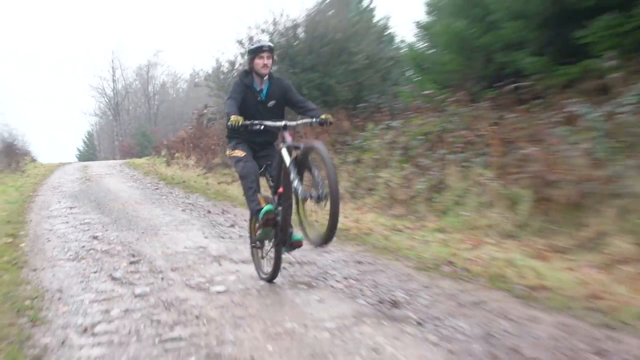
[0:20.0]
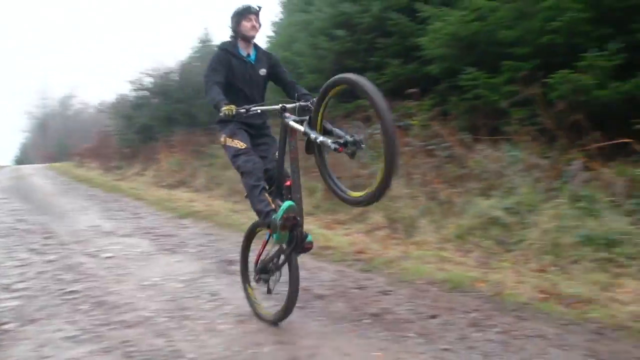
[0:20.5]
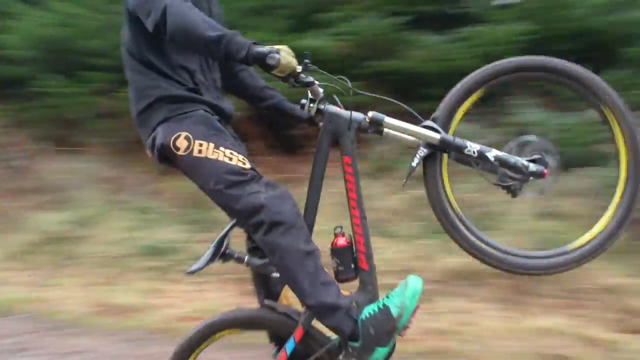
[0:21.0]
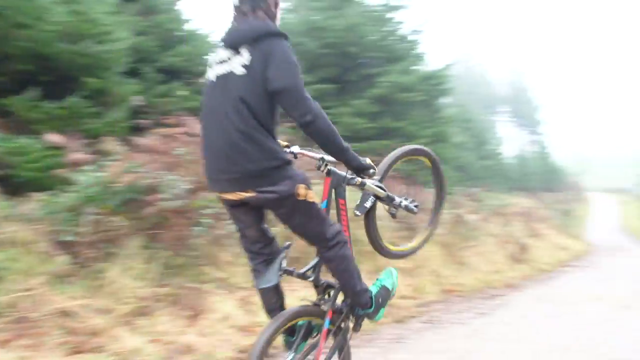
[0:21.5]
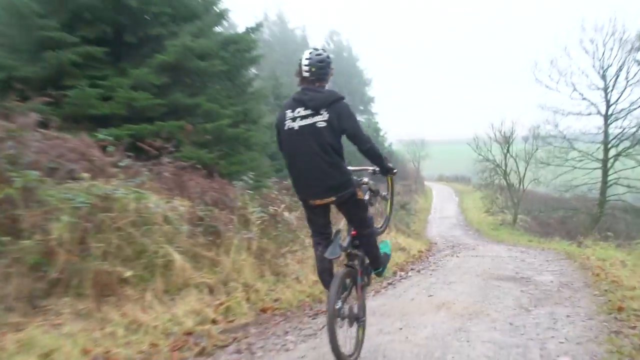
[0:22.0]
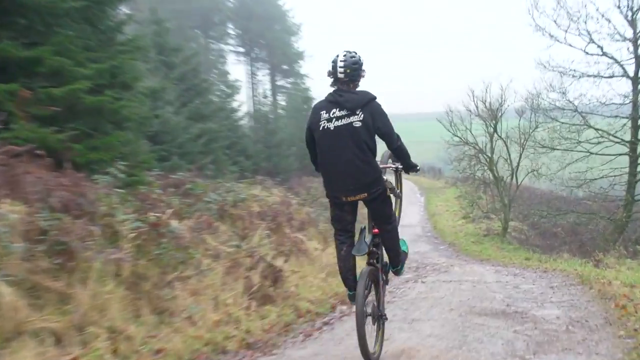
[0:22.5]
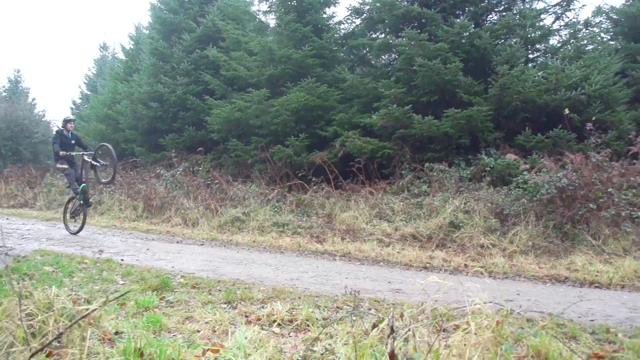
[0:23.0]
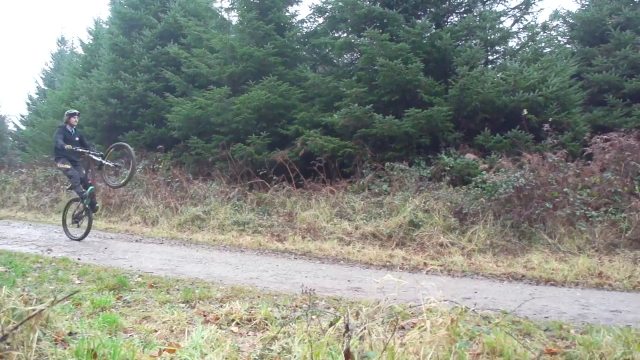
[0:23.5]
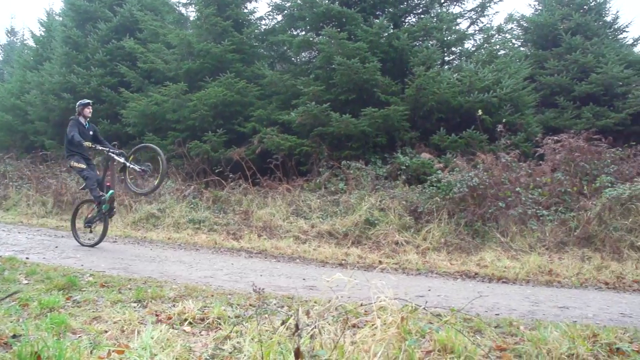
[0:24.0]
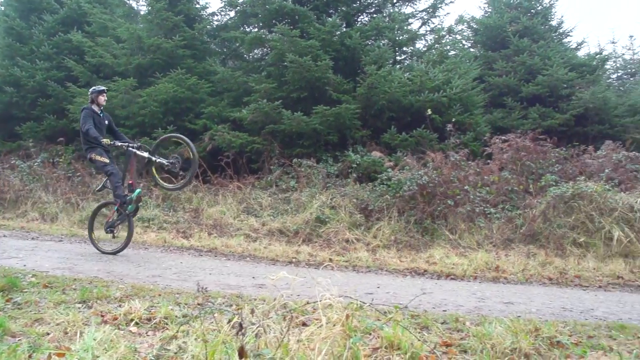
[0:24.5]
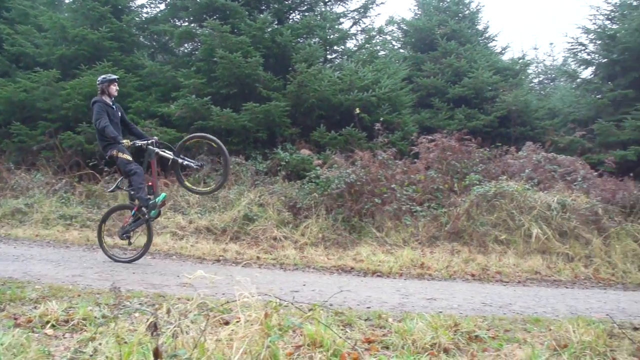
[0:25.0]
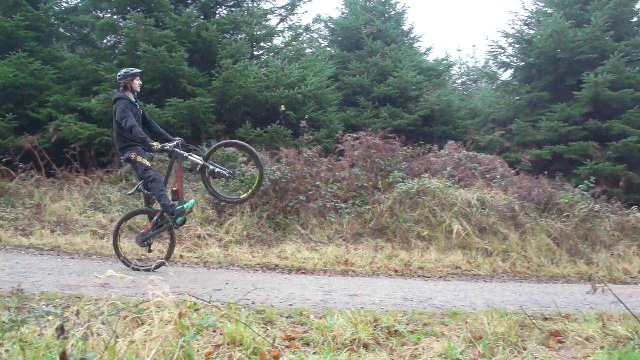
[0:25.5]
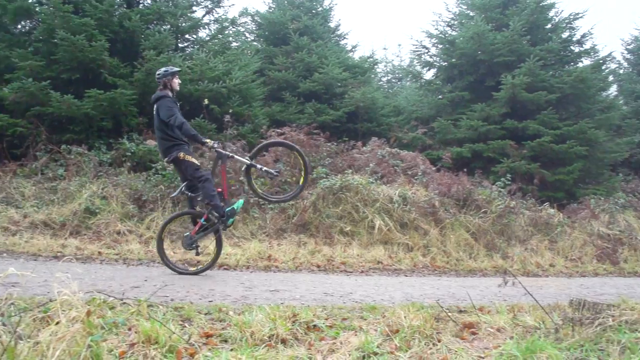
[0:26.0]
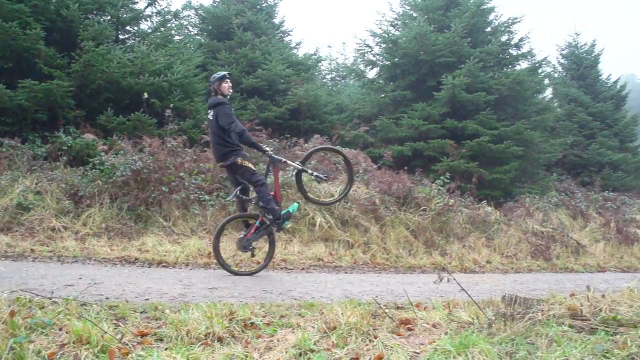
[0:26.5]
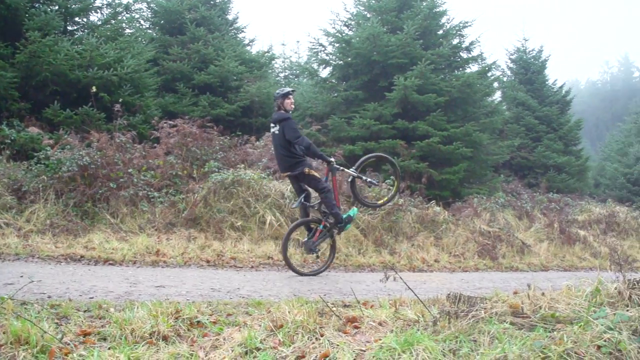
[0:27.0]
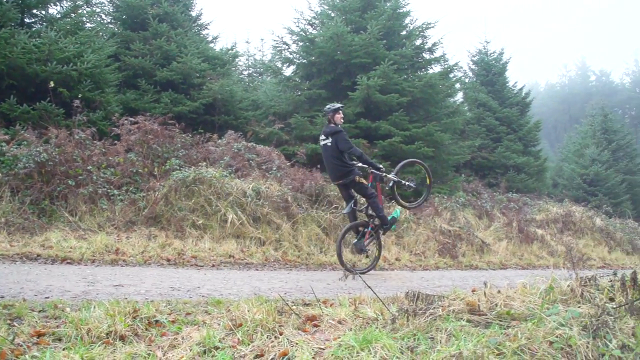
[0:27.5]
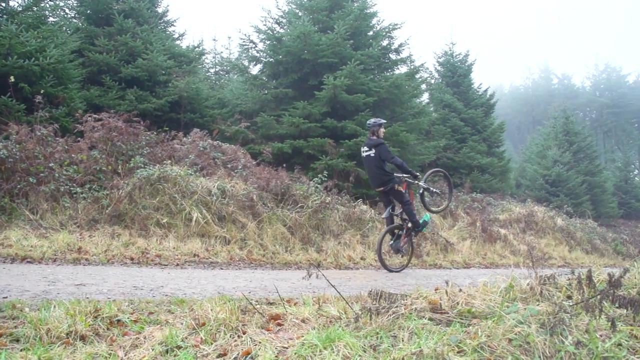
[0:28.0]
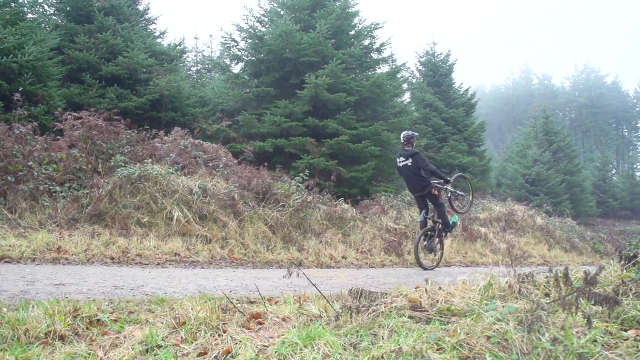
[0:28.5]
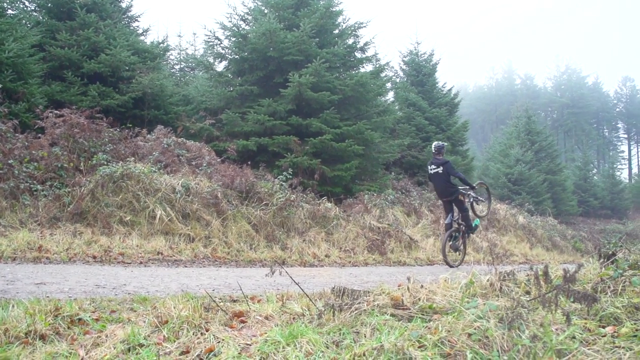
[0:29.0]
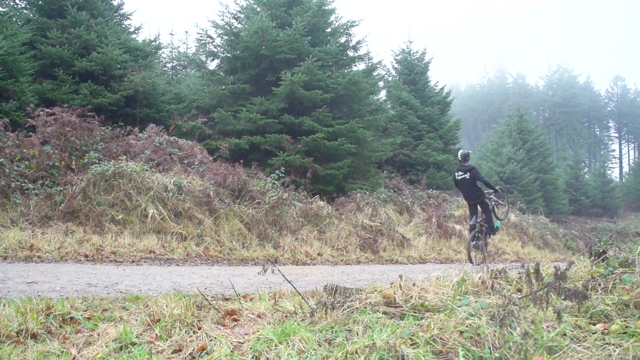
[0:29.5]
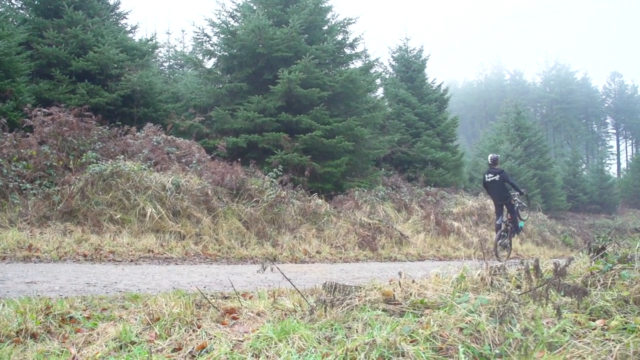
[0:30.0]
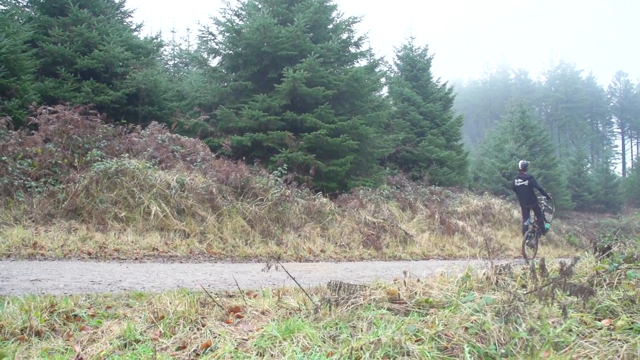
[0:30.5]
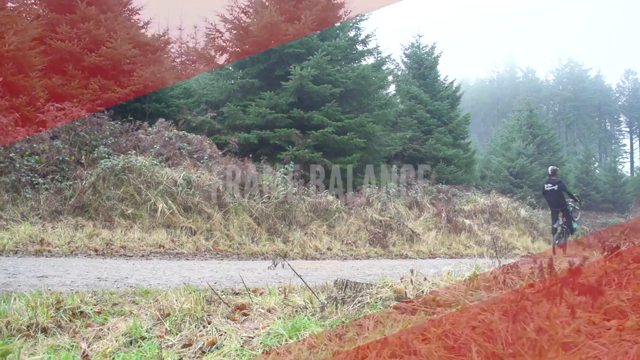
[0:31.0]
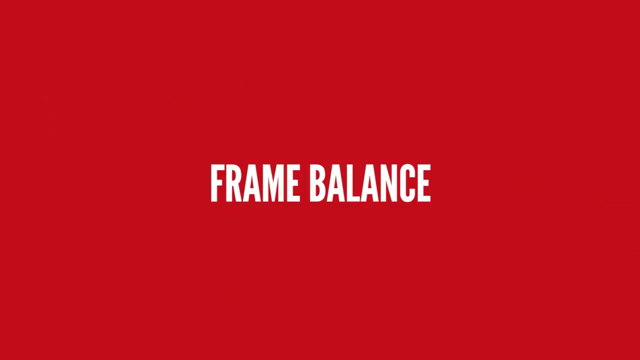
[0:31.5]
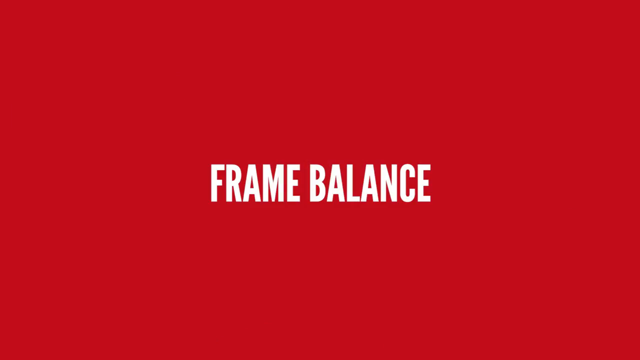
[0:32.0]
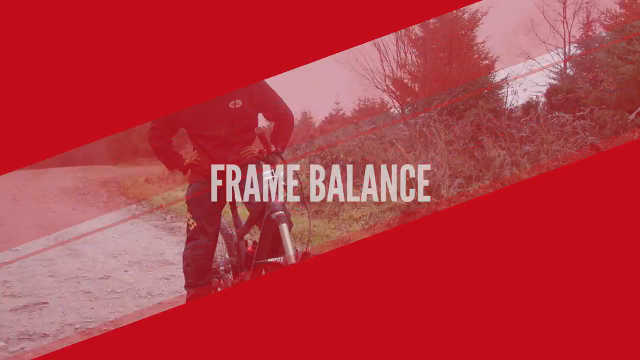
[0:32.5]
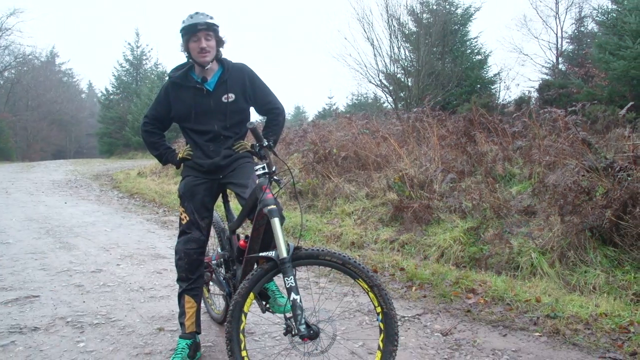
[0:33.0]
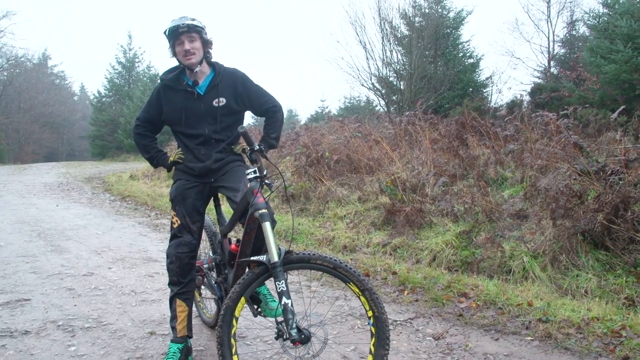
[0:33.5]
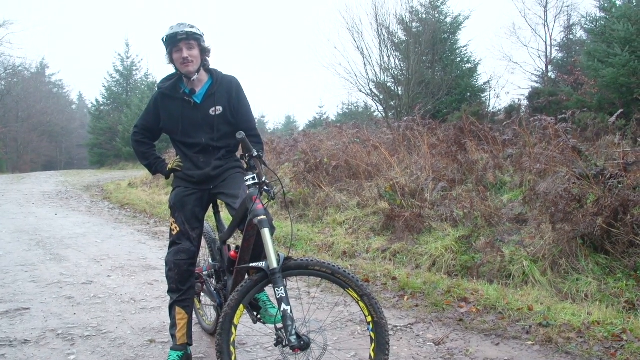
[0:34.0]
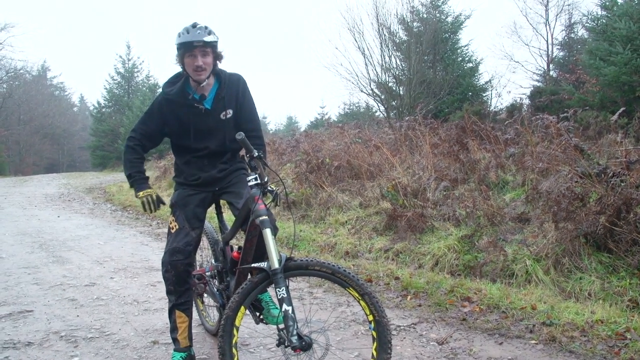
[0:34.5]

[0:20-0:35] A guy doing tricks on a bike, wearing a black hoodie or jacket, pops a wheelie as he rides down the road, with only one tire on the ground and the other in the air. The bike's tires are black and yellow, and text says something about frame balance. He is the only person in the video. The skies are very cloudy and overcast, with a lot of trees behind him, and the weather looks like it could be early spring or fall. He wears pants, a jacket, shoes, a helmet, and yellow and black gloves.